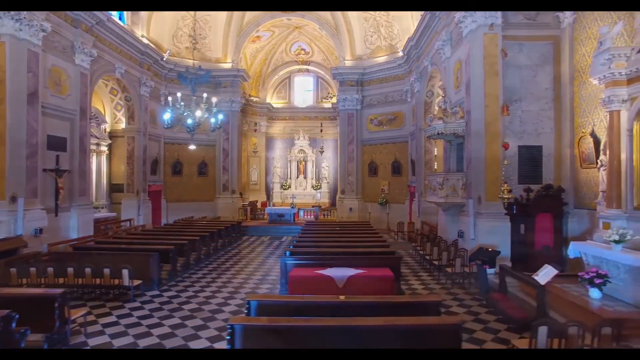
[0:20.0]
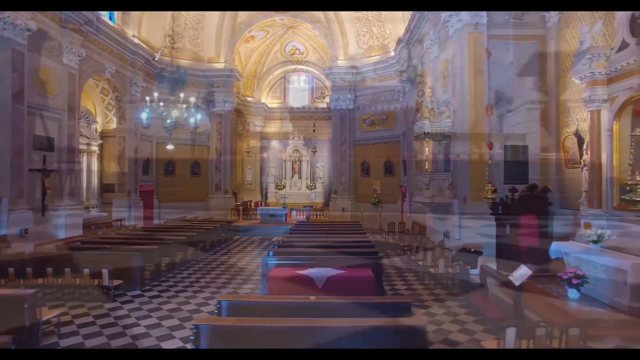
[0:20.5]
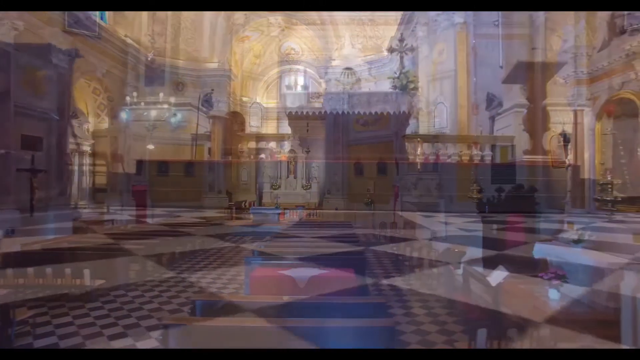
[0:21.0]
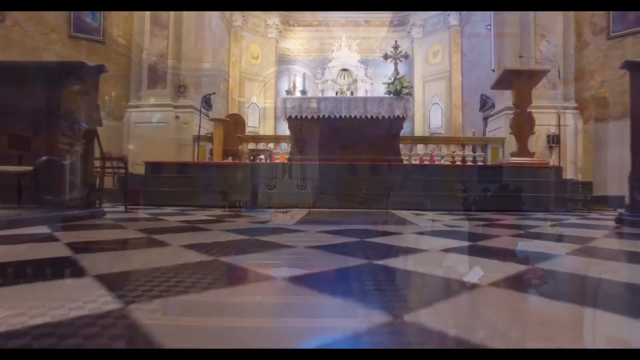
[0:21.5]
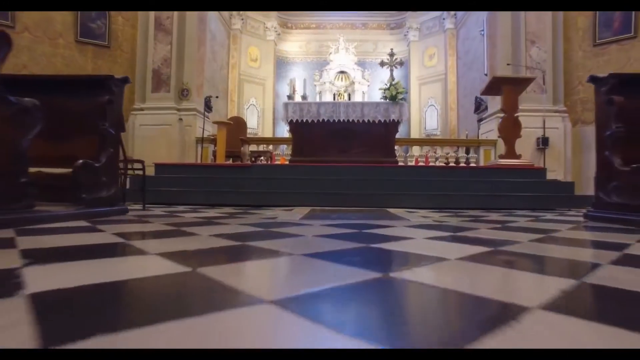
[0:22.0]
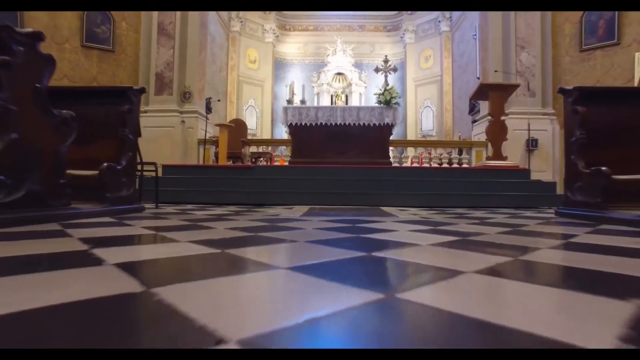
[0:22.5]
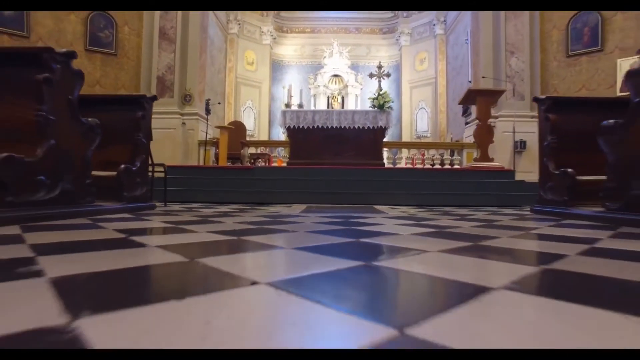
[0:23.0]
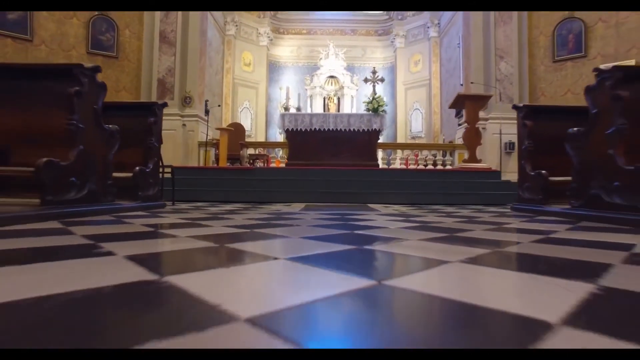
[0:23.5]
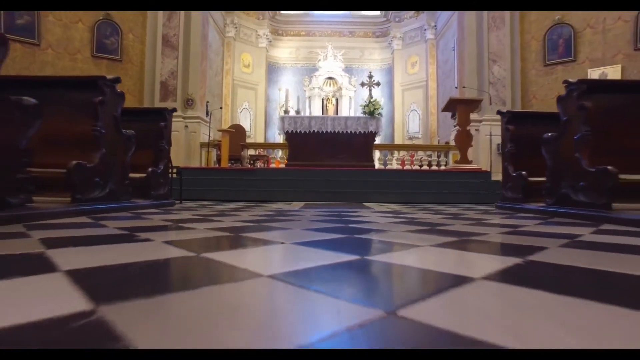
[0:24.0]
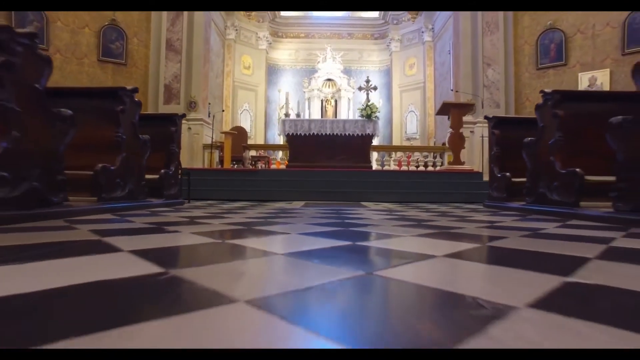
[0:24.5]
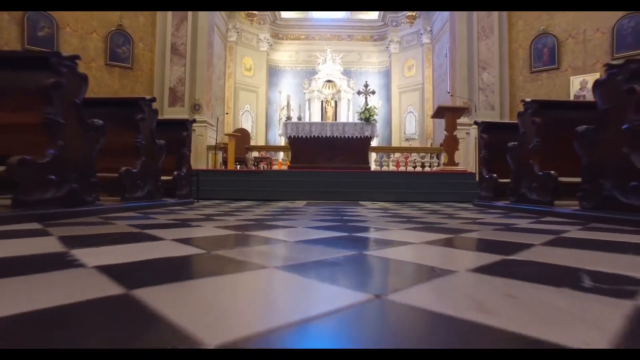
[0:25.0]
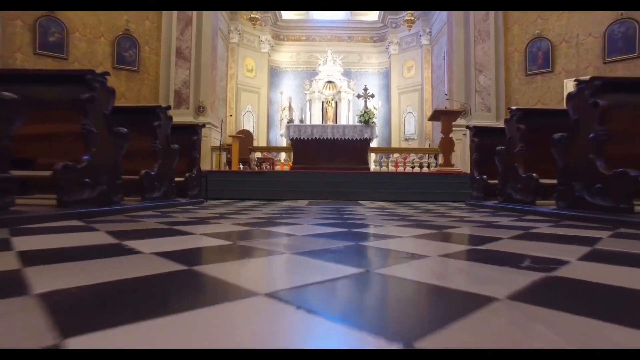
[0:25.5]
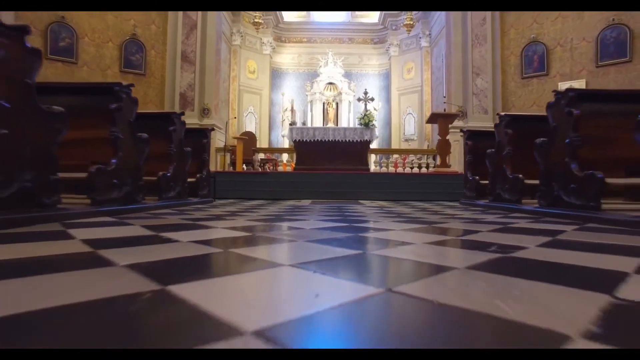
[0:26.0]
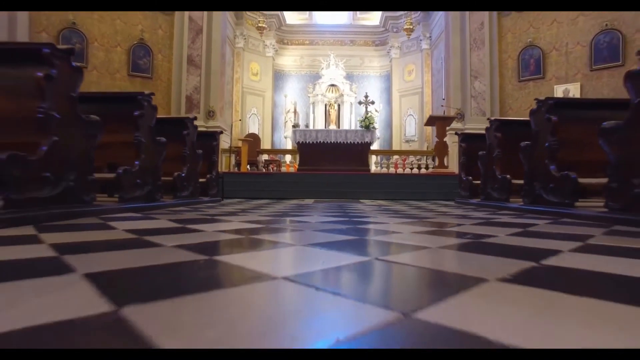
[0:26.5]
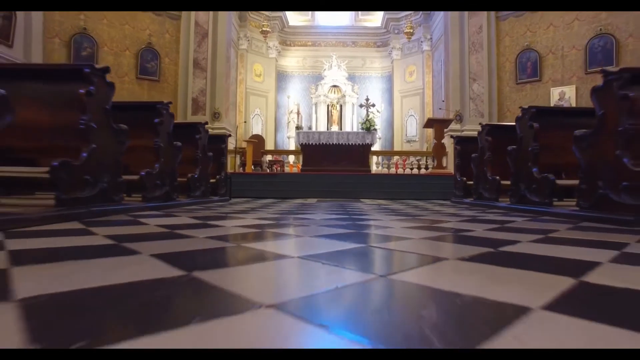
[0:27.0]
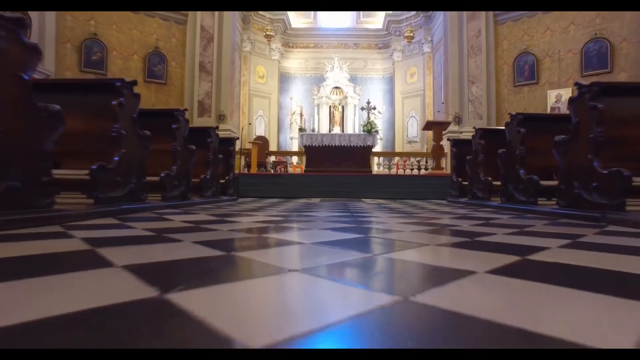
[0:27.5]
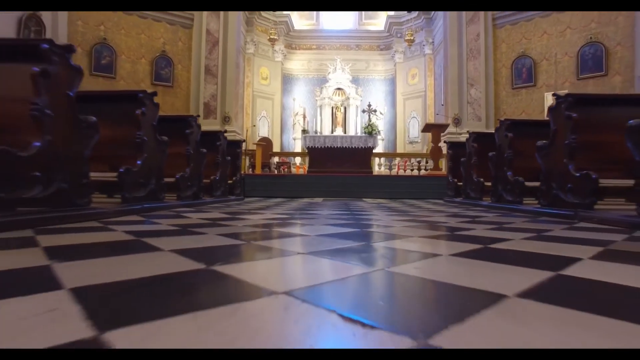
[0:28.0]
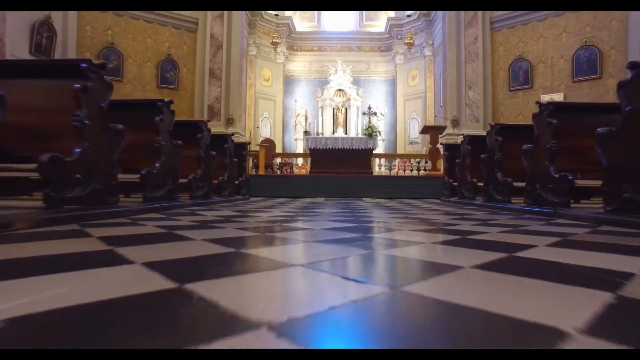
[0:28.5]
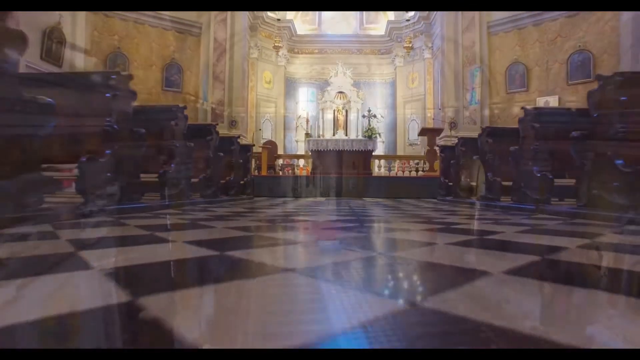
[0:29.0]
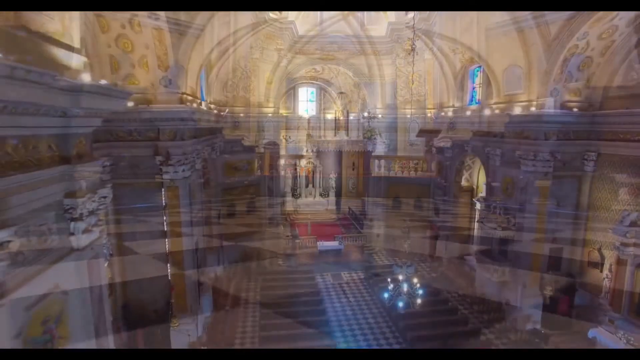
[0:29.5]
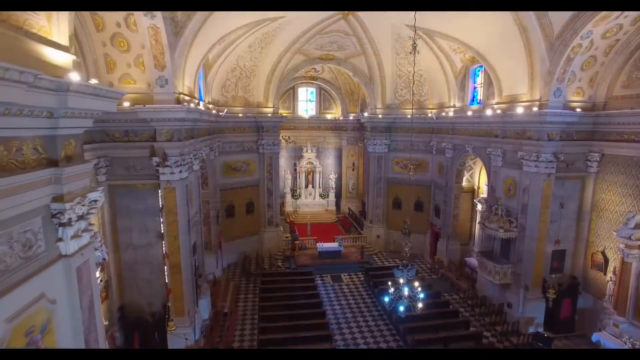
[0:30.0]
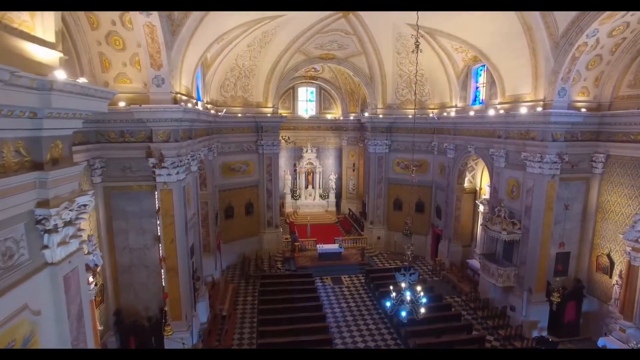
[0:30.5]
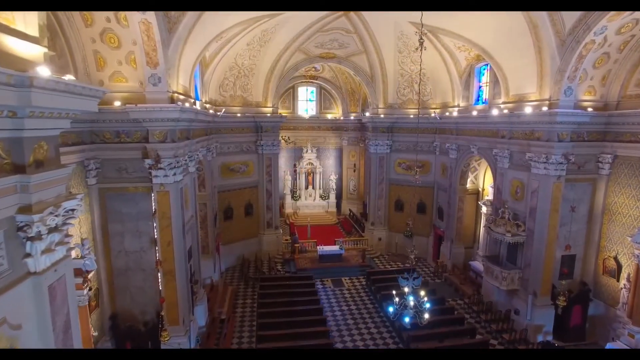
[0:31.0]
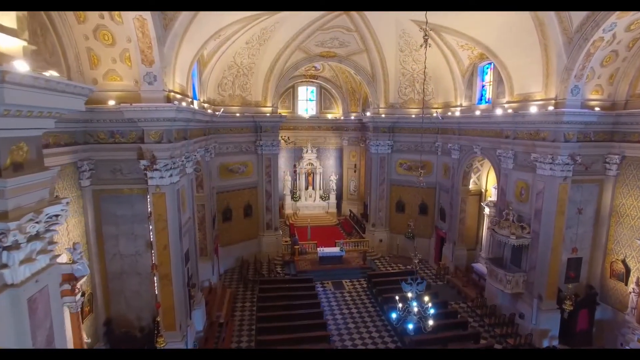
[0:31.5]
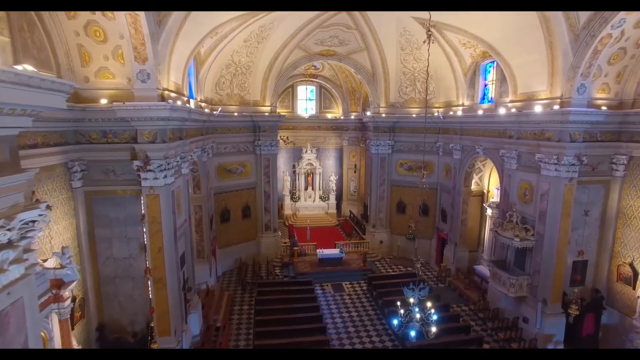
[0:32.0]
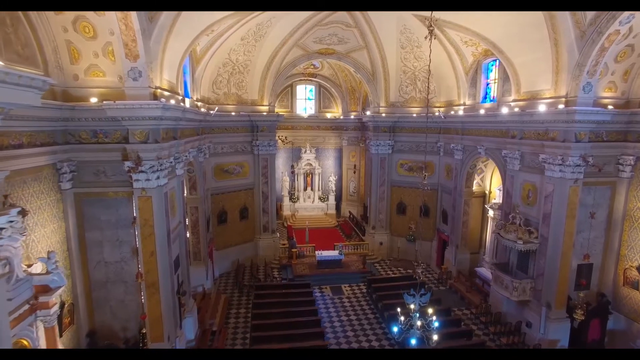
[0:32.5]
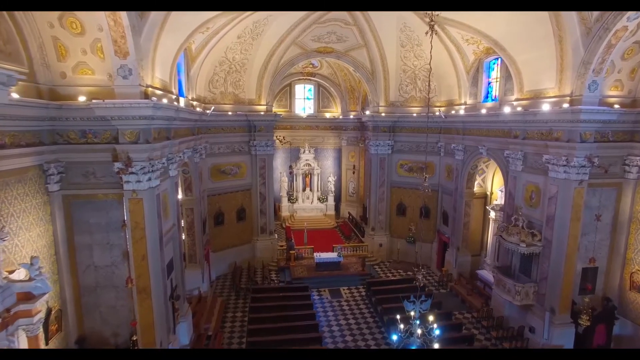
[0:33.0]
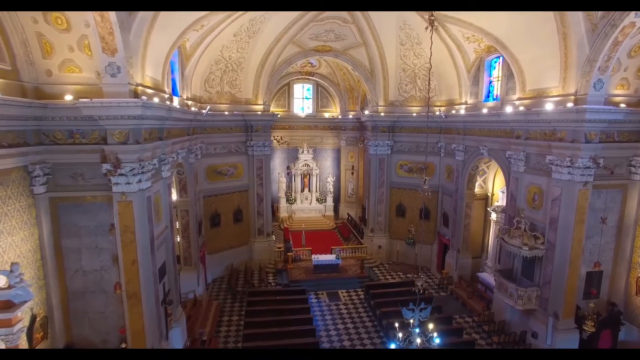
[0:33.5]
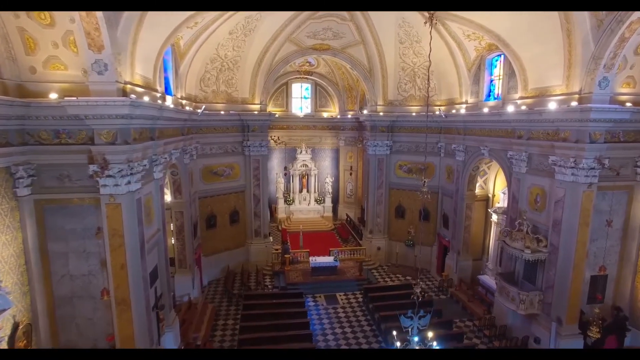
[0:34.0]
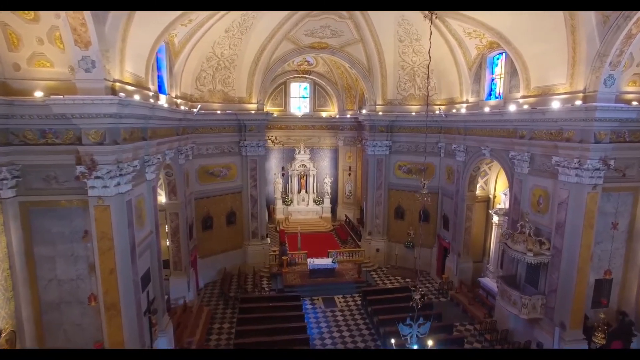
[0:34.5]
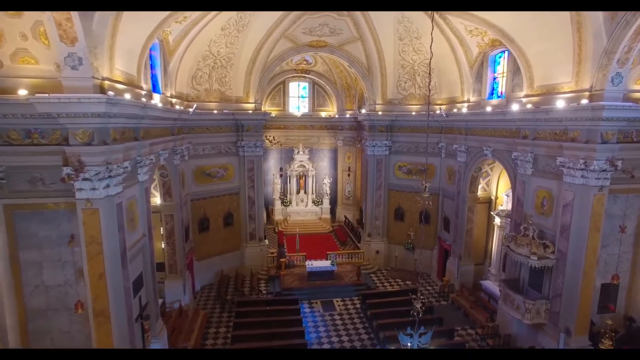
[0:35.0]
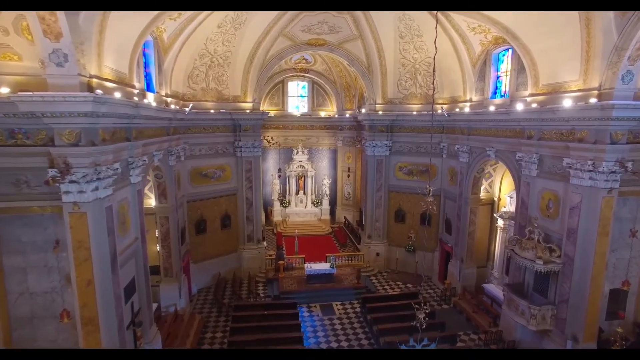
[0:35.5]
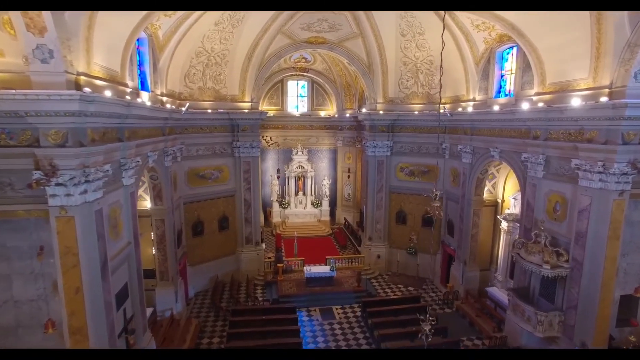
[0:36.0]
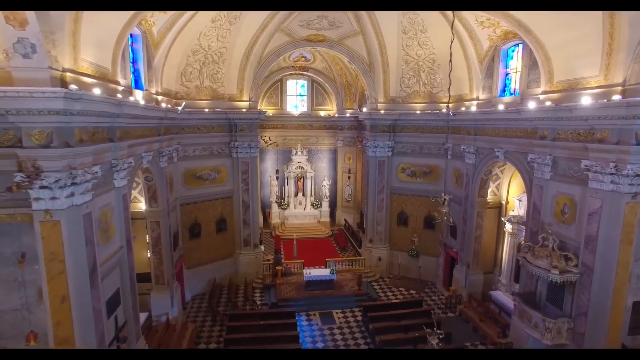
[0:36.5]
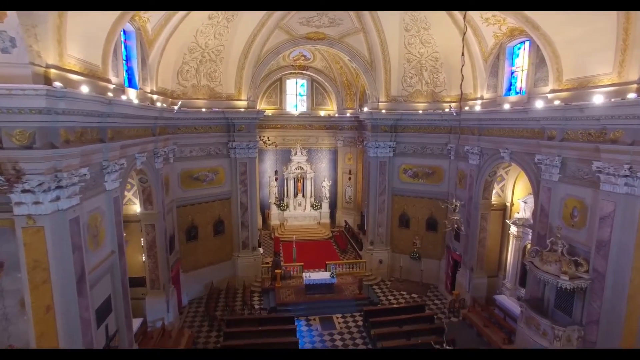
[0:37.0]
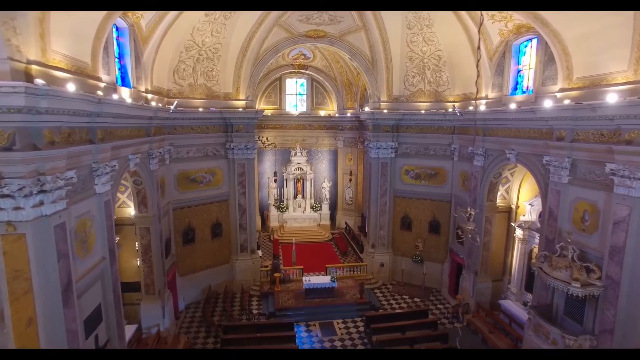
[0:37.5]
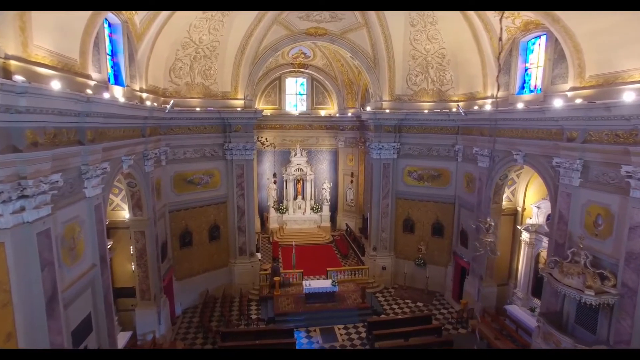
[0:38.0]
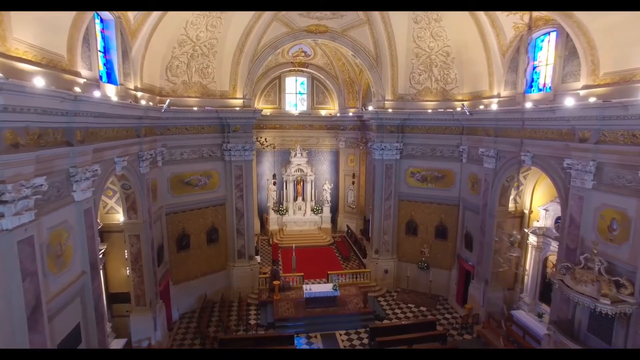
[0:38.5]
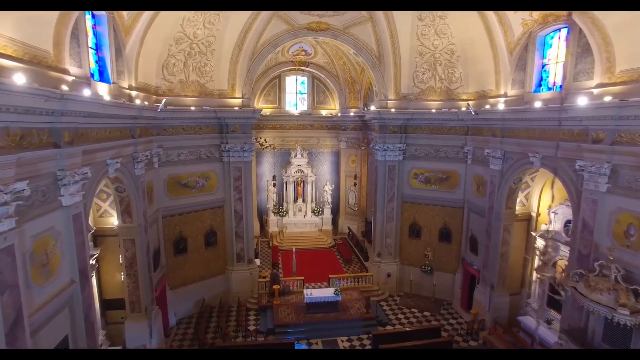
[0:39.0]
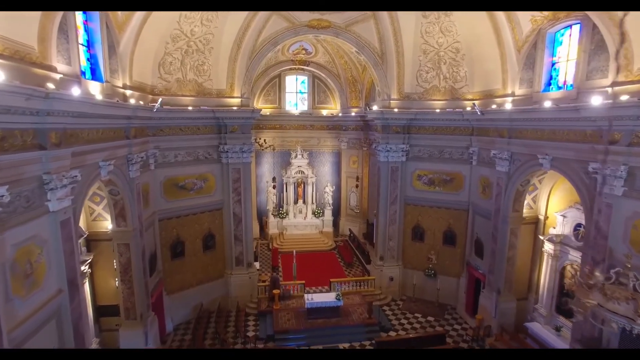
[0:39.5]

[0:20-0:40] The camera continues to pan around the church interior, now at ground level looking up, just above the black and white checkered tile floor. Wooden pews are on either side, and ahead is the altarpiece. At the front is a white cloth with a crucifix and some candles. A lectern is visible on the right, and a wooden fence behind leads to the main carved stone altarpiece at the rear. A microphone on a stand is visible to the left. The pictures on the gold-coloured walls are oil paintings in frames with rounded, arched tops, somewhat reminiscent of the church's arches, though their subjects cannot quite be seen. The camera zooms out and the view changes to an aerial view looking down from the ceiling.